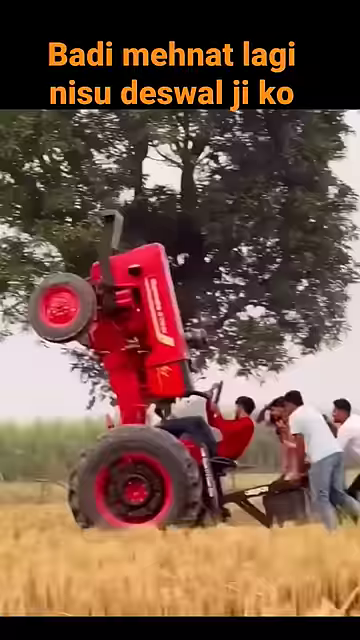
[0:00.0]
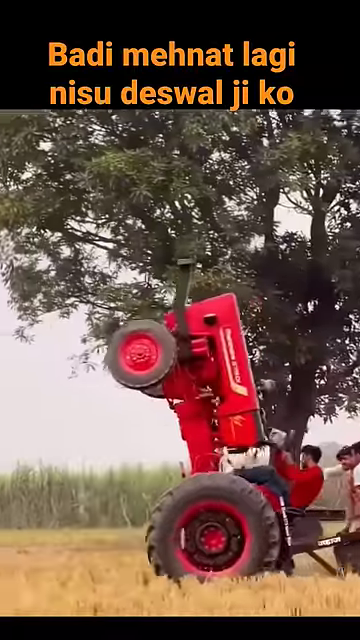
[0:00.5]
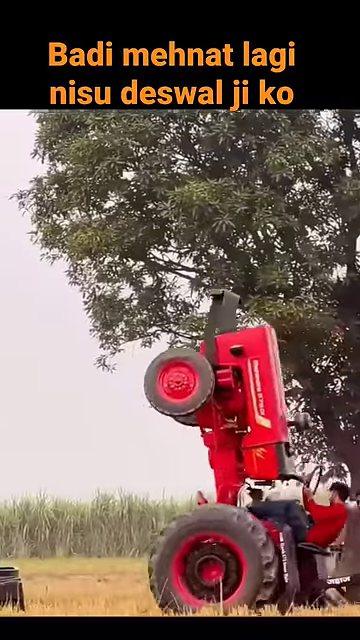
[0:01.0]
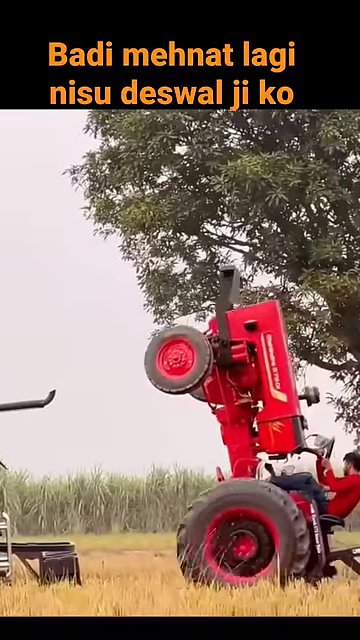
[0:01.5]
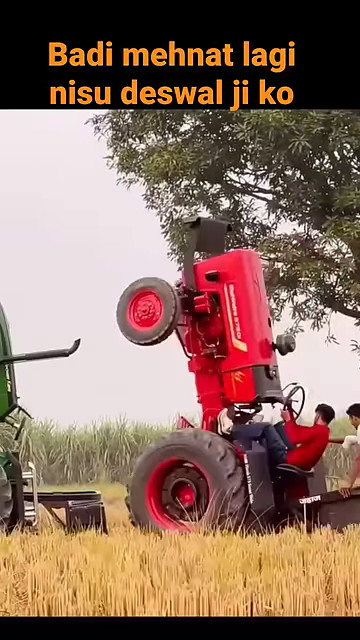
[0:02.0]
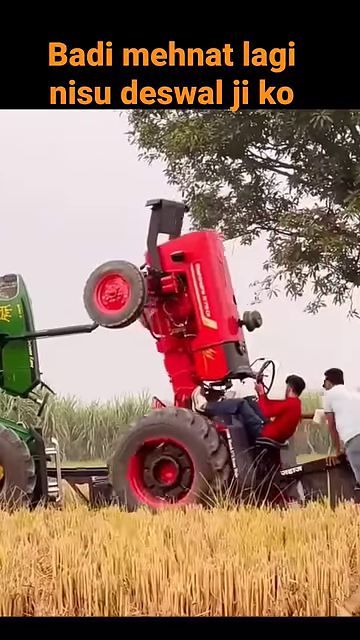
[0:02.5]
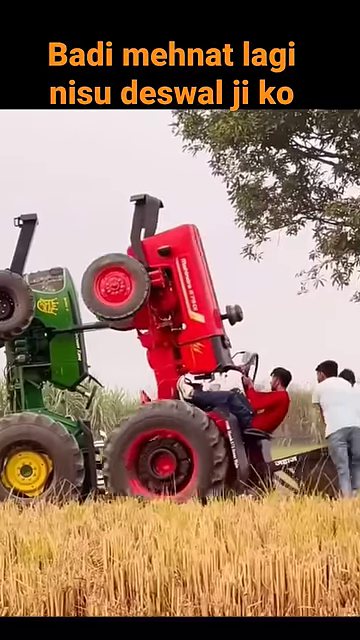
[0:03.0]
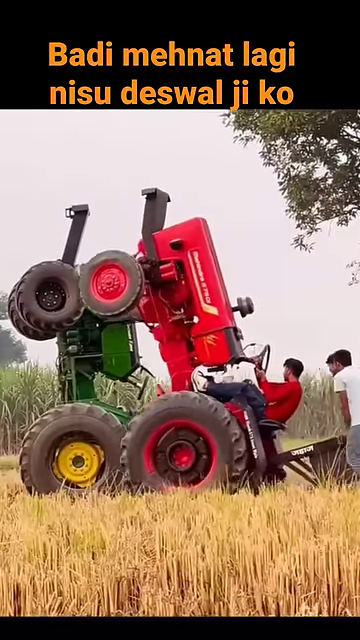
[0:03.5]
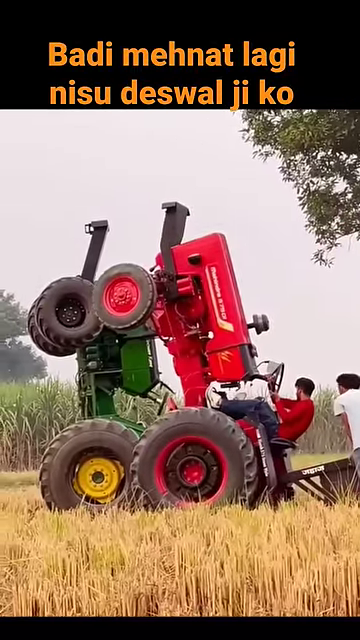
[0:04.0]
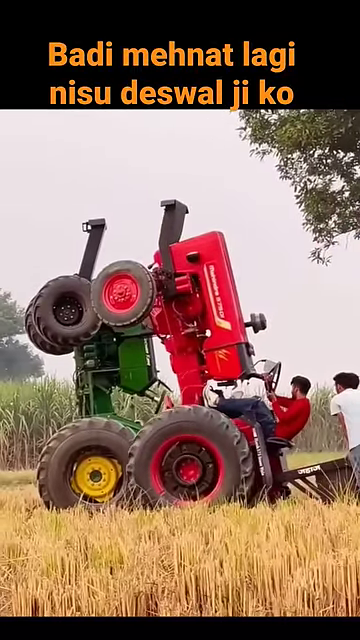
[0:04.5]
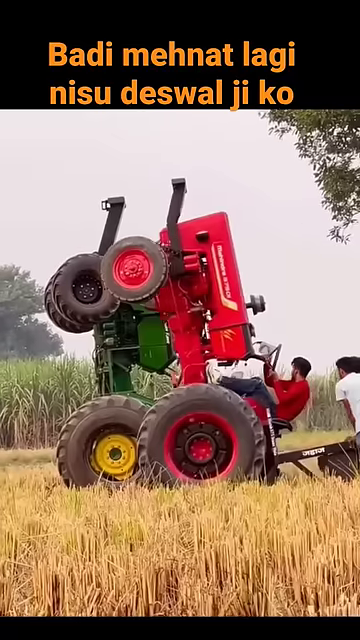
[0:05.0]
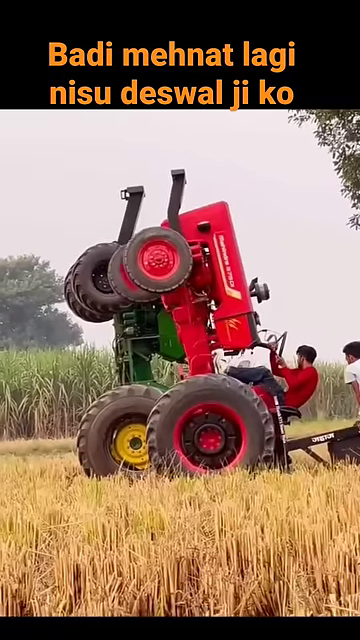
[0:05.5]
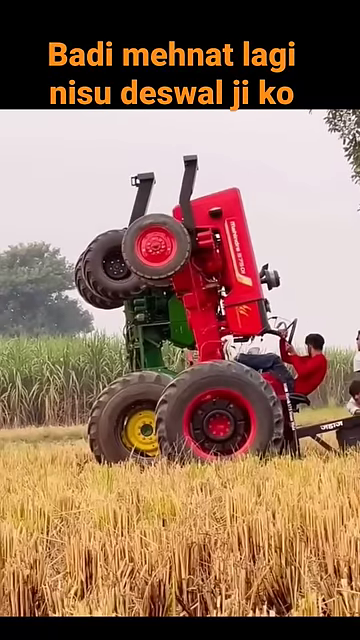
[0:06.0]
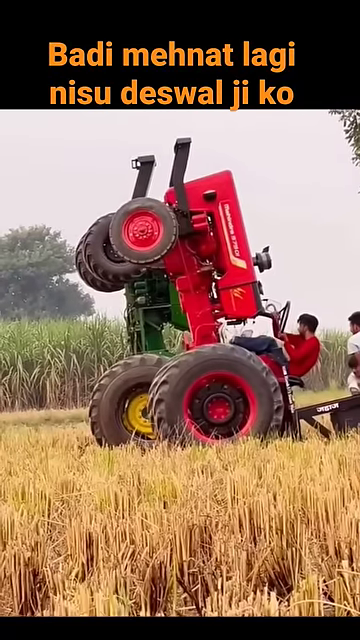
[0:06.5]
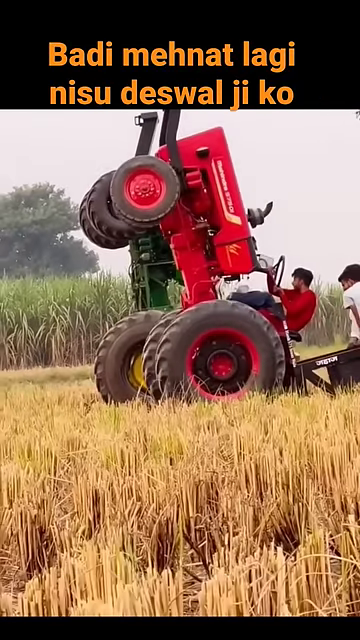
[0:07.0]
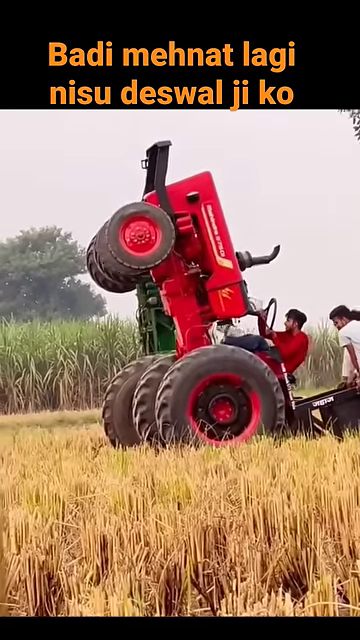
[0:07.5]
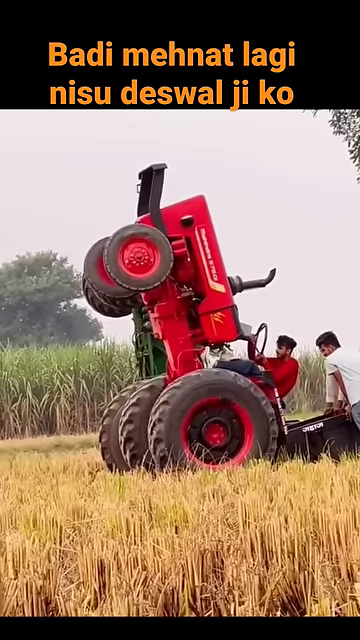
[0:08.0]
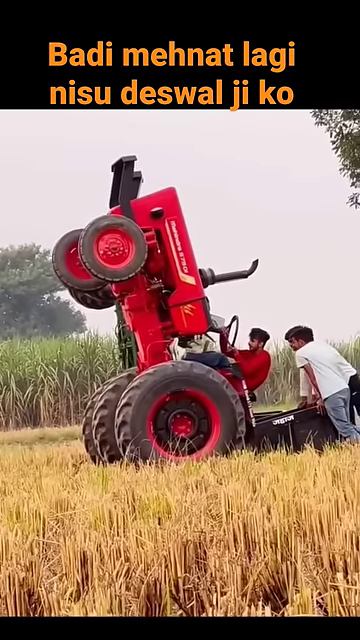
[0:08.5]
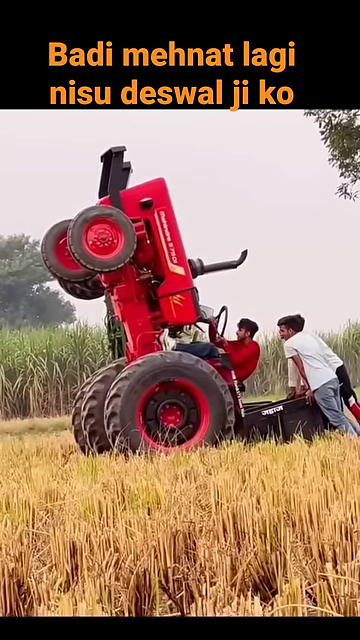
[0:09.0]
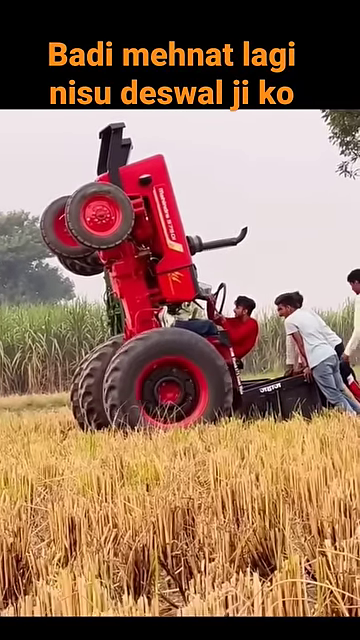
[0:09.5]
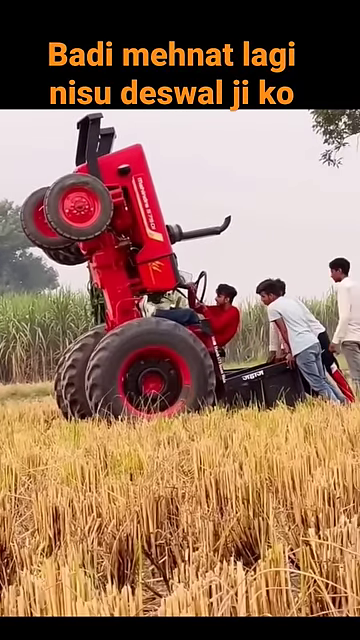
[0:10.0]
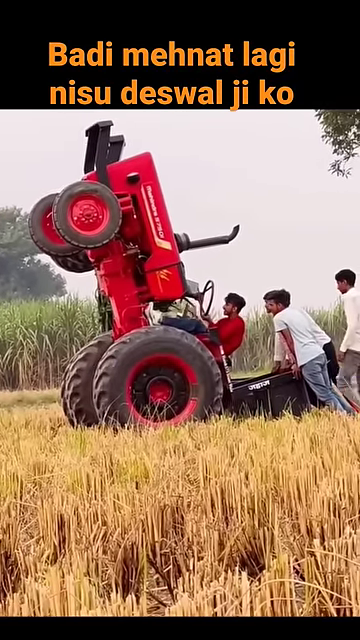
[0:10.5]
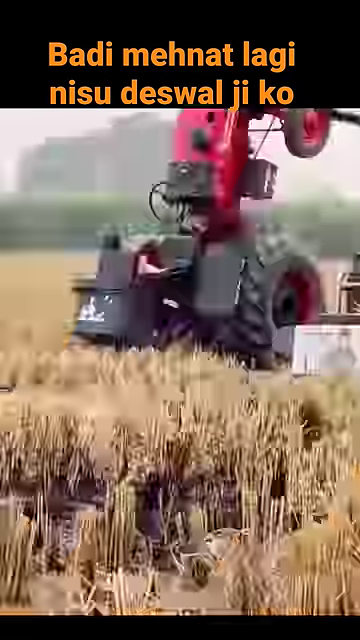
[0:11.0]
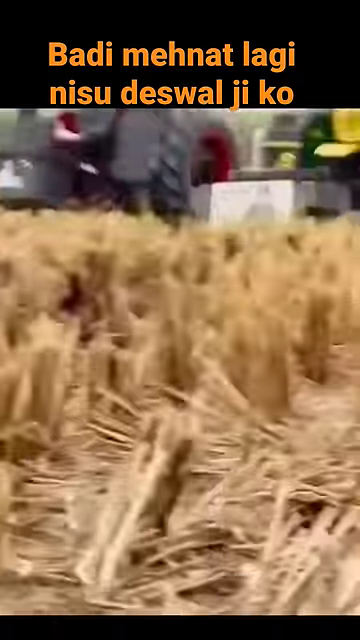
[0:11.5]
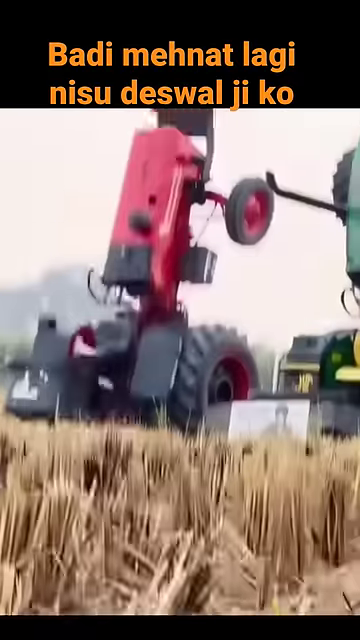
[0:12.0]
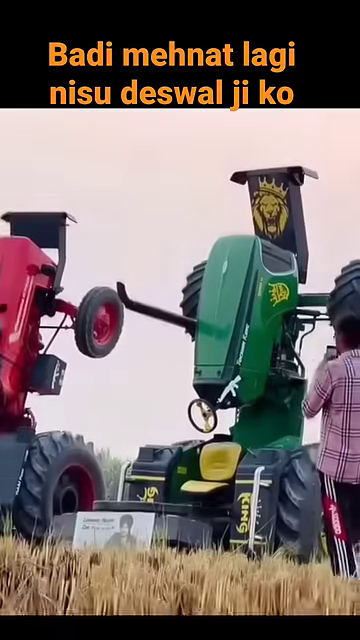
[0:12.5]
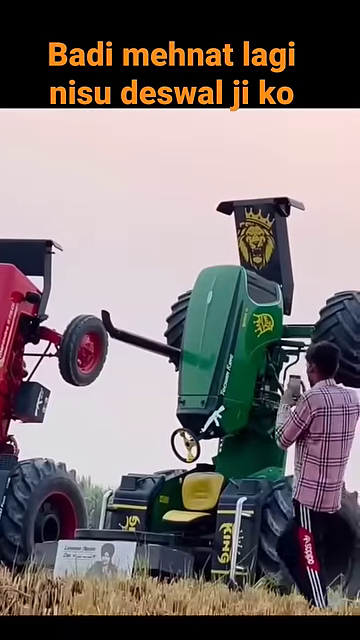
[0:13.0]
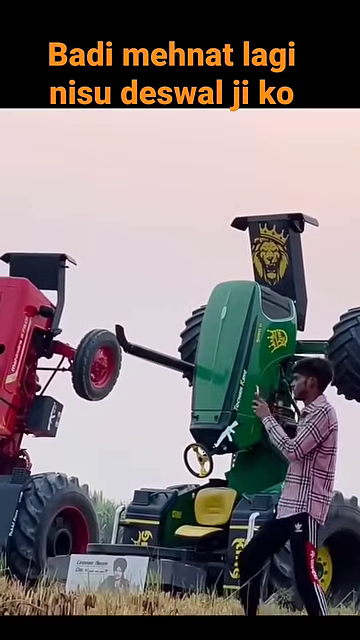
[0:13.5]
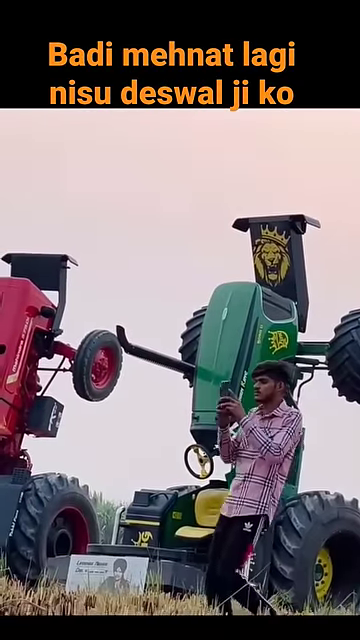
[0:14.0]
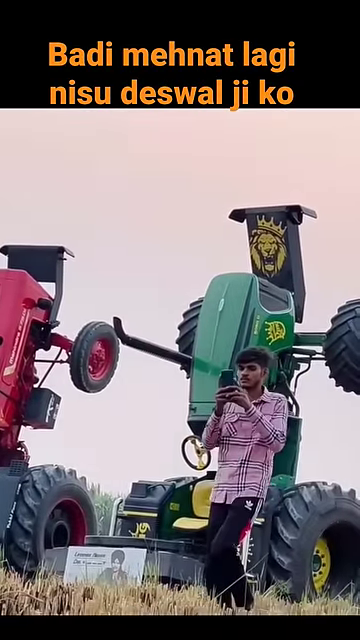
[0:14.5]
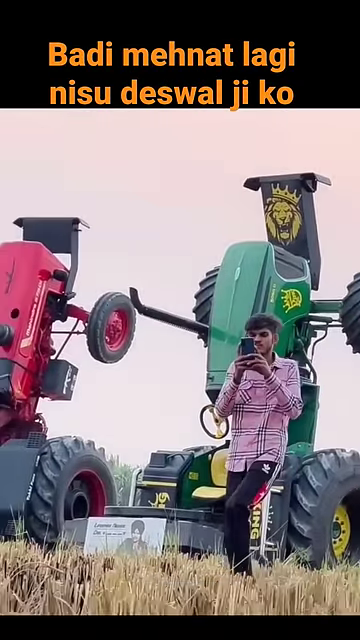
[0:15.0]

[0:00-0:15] A man in a red shirt drives a tractor whose front end is pointed straight up toward the sky, and he parks it next to another green tractor that is also straight up. They are in a field. Behind him, another man with a camera is filming, and there are two other people as well, for a total of four: the driver of the tractor and three more behind the tractor, one of whom has a camera and is videotaping the whole thing. The back wheels of the tractors are very big and the other wheels are smaller.